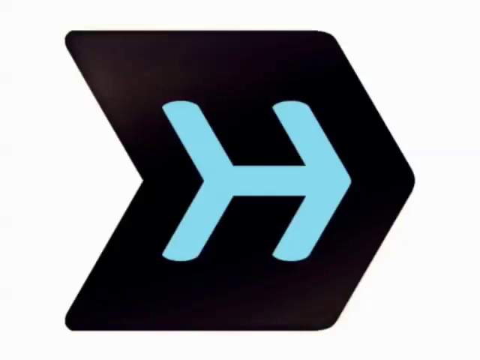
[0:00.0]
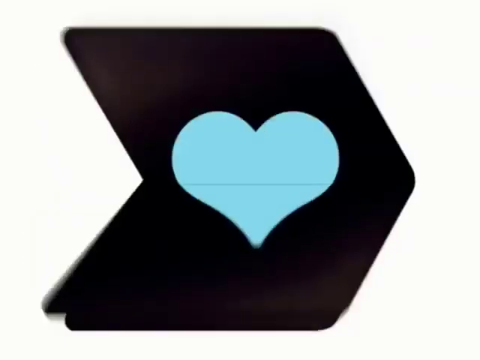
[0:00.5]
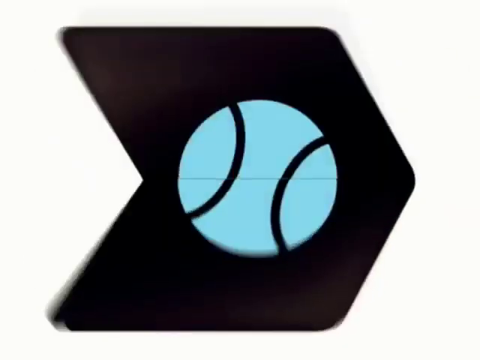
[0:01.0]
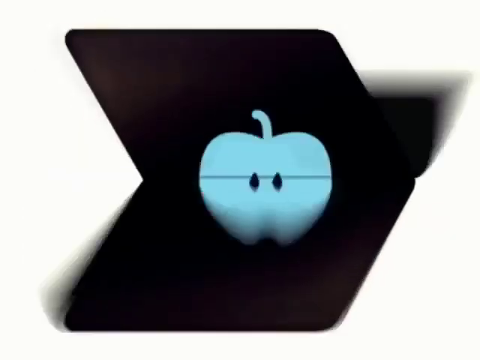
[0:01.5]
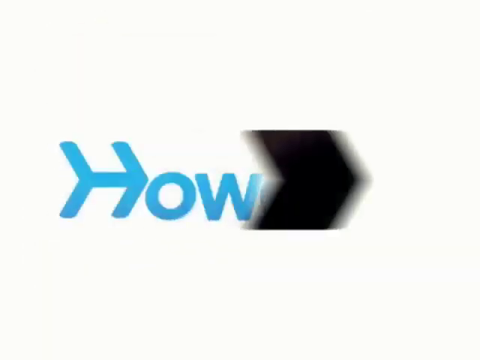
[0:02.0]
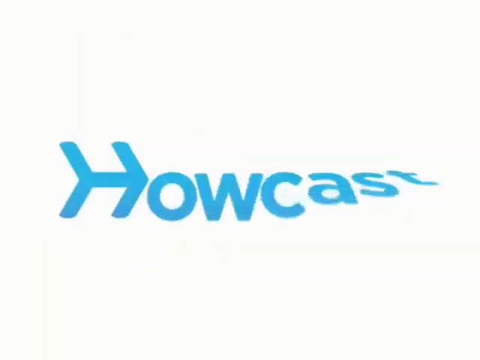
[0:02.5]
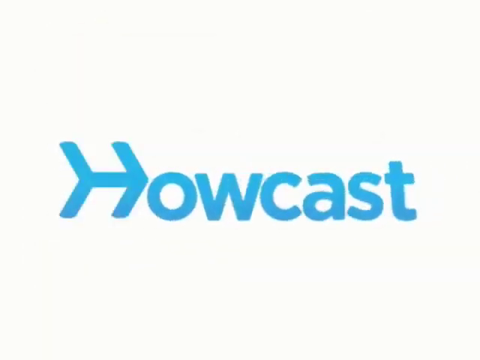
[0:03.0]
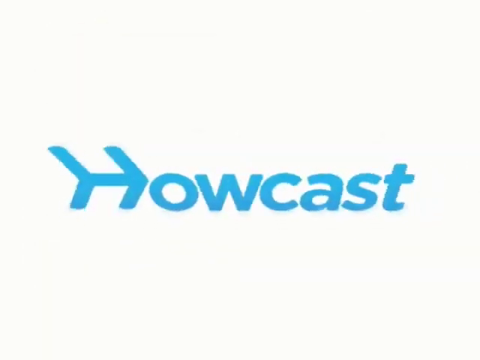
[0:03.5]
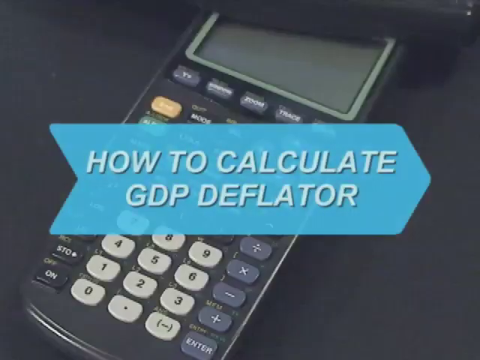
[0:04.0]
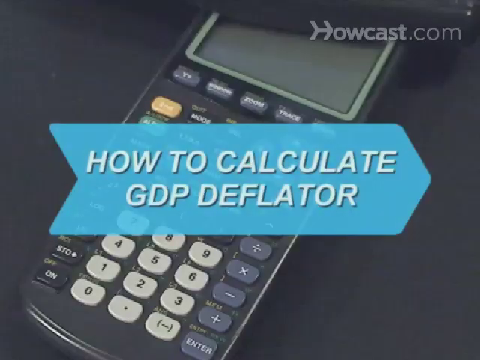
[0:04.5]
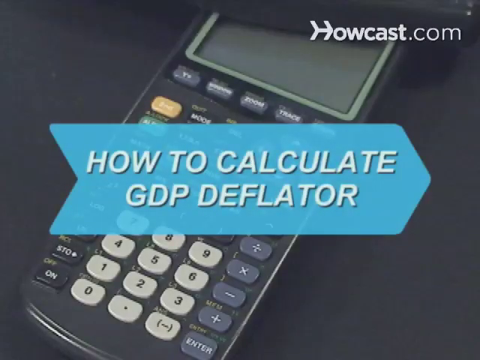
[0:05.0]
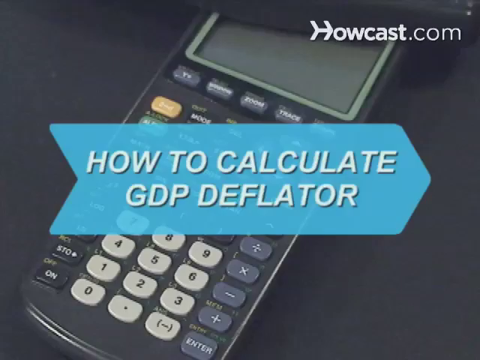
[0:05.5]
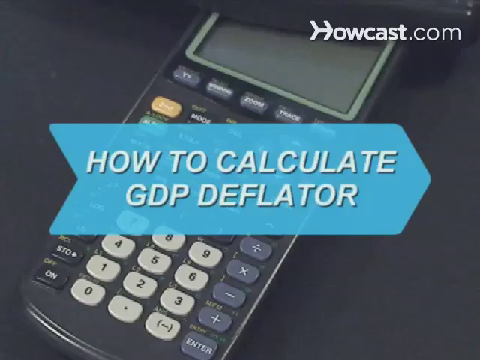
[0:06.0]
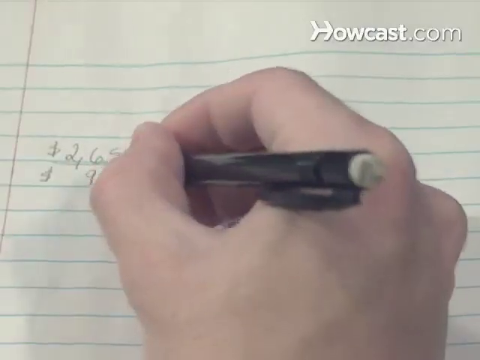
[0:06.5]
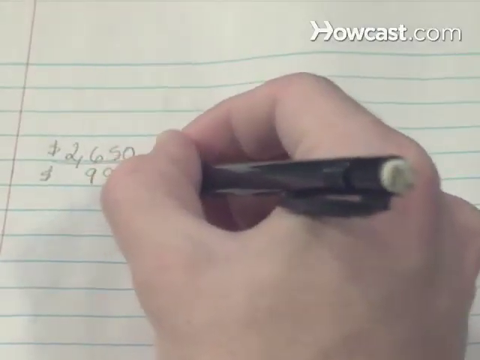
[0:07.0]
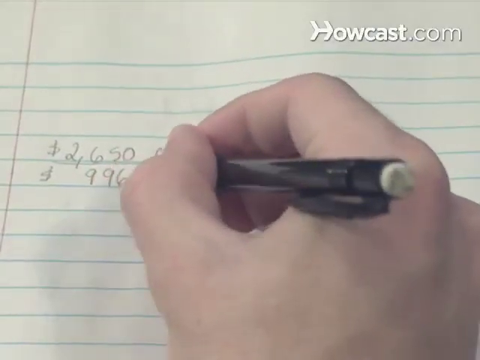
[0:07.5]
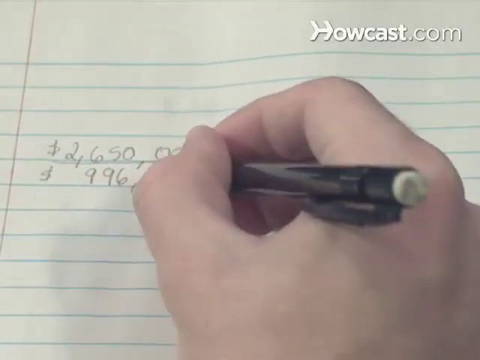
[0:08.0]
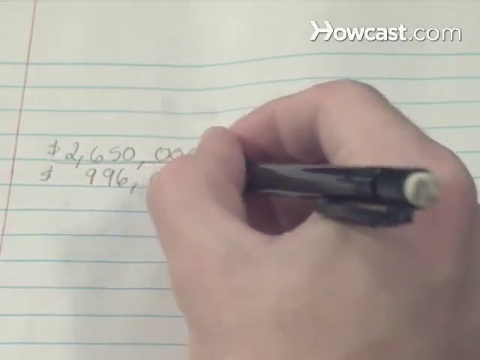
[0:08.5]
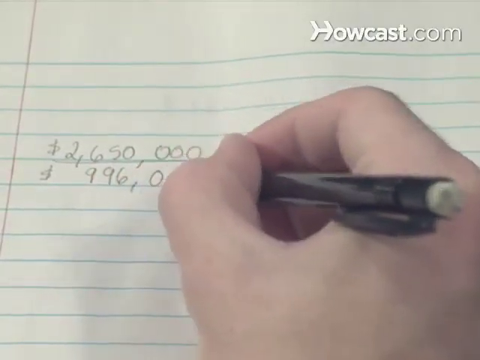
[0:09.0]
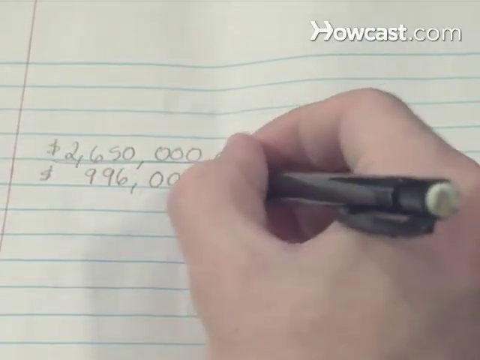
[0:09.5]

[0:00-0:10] The video begins with a full-frame logo: a white background with a black arrow shape containing a smaller pale blue arrow shape. The black shape acts like a flick book, cycling through many different shapes and images, including a knife and fork, a money bag, a dog and a star. It then zooms out of frame from left to right, leaving behind the word "Howcast". The word animates by flipping upwards and turns into a blue arrow with white text on top that reads "how to calculate GDP deflator". Behind this caption is a photograph of a calculator, and "howcast.com" appears in the top right of the screen. The video then cuts to a close-up of someone's hand holding a pencil and writing numbers on a sheet of ruled paper; the numbers are very large, in the millions or billions.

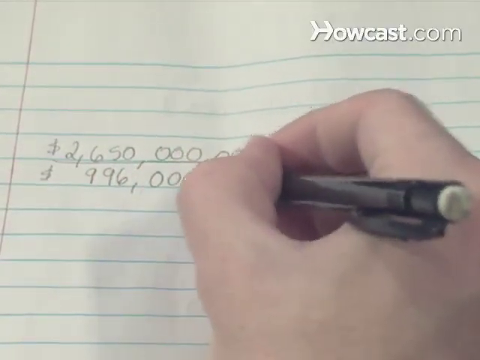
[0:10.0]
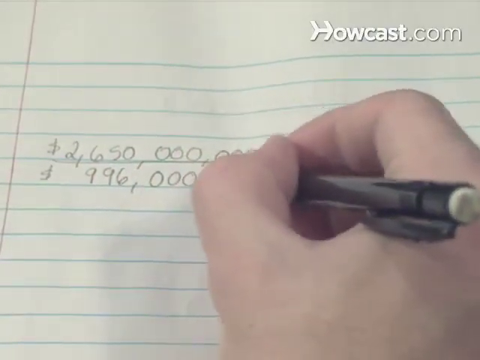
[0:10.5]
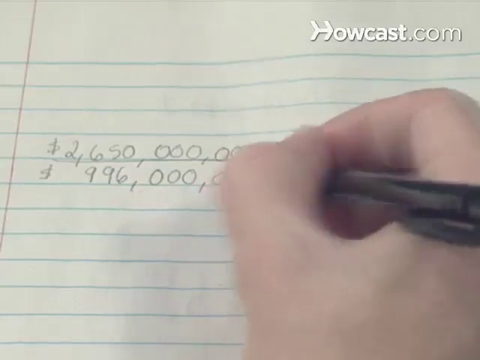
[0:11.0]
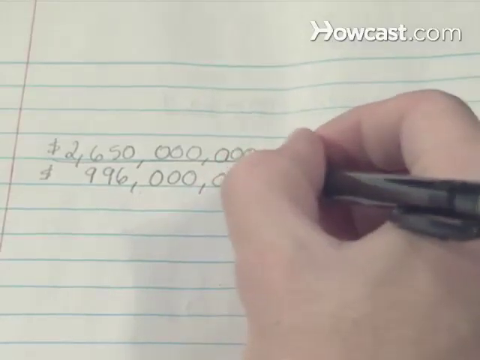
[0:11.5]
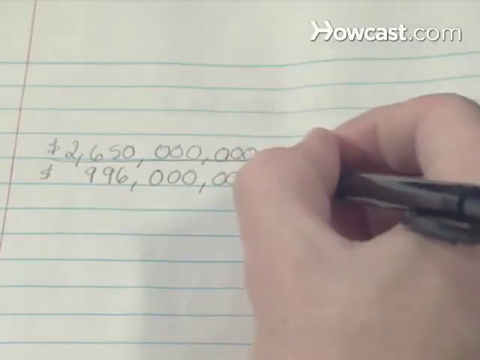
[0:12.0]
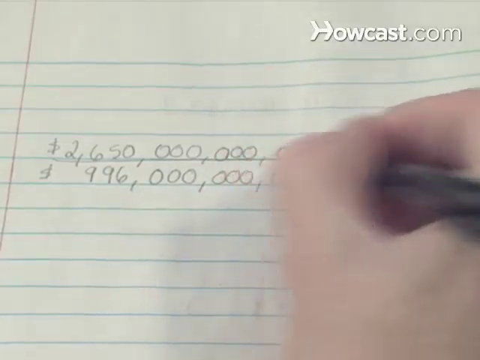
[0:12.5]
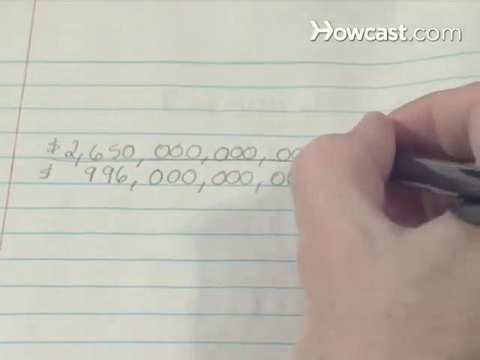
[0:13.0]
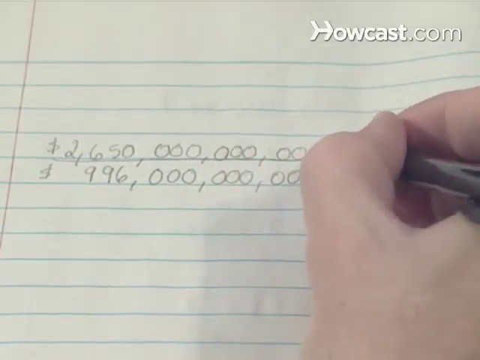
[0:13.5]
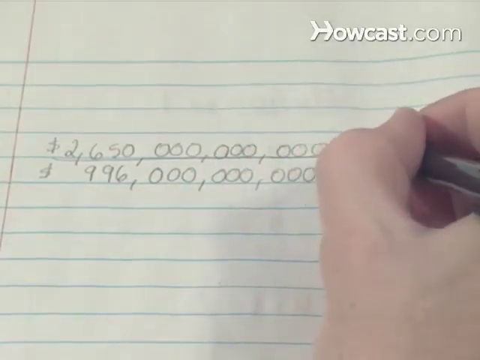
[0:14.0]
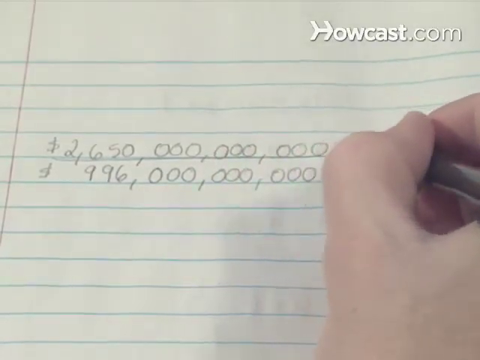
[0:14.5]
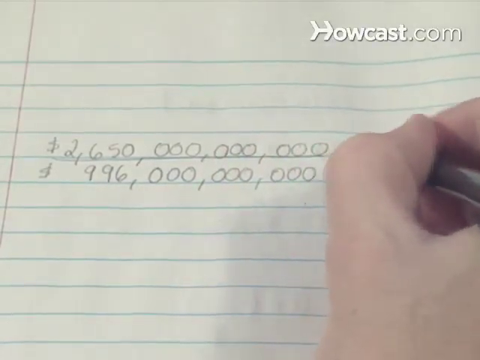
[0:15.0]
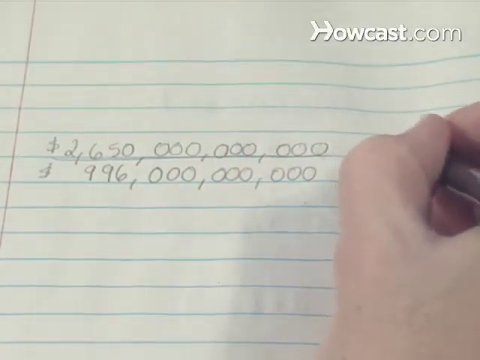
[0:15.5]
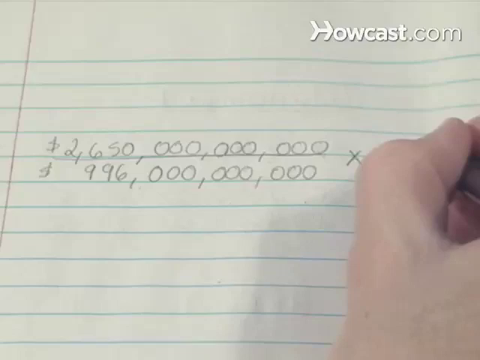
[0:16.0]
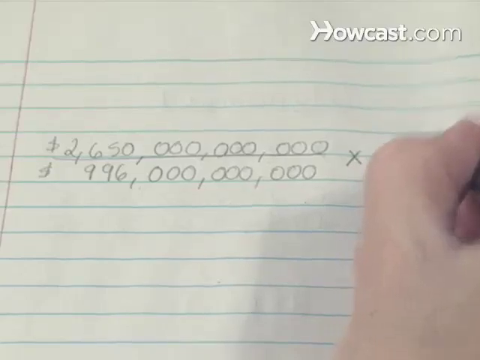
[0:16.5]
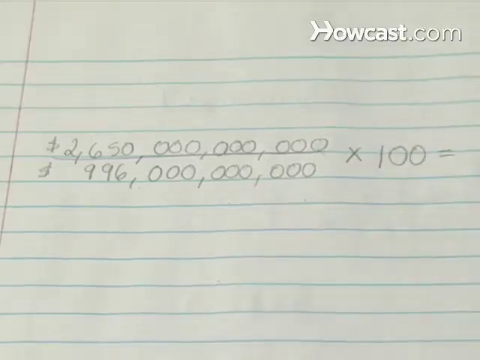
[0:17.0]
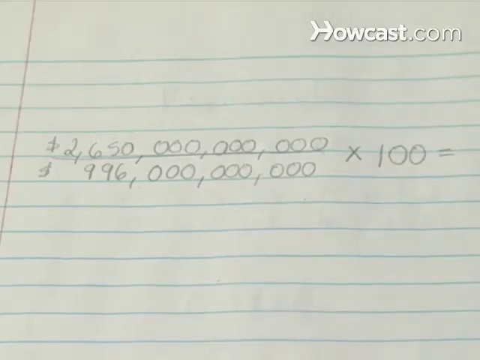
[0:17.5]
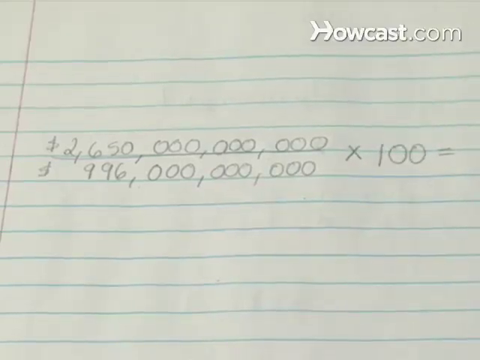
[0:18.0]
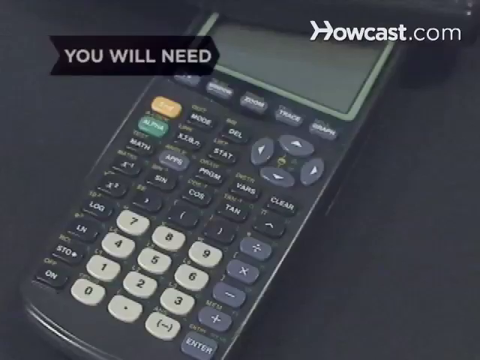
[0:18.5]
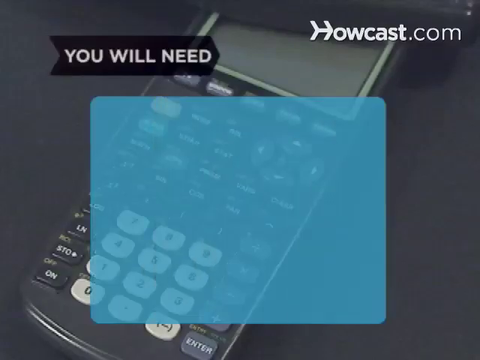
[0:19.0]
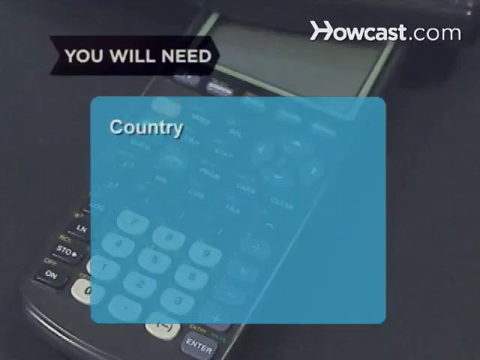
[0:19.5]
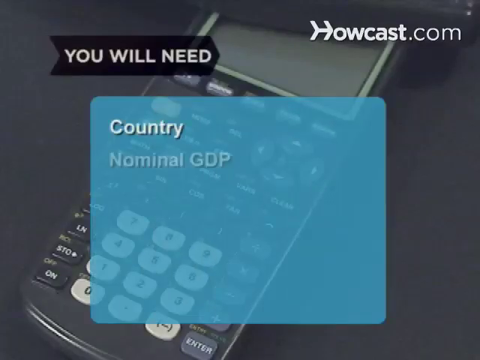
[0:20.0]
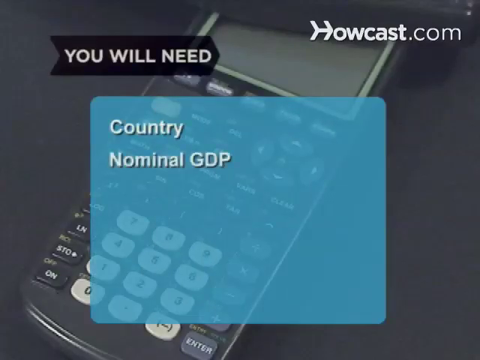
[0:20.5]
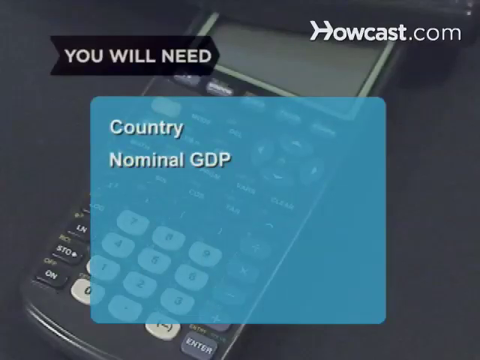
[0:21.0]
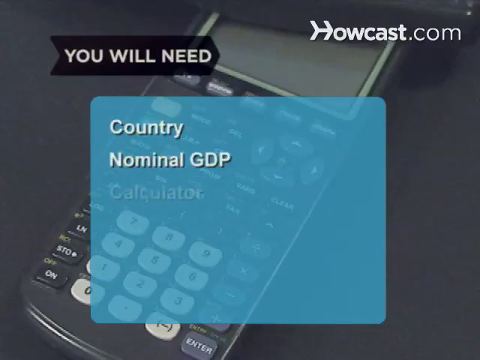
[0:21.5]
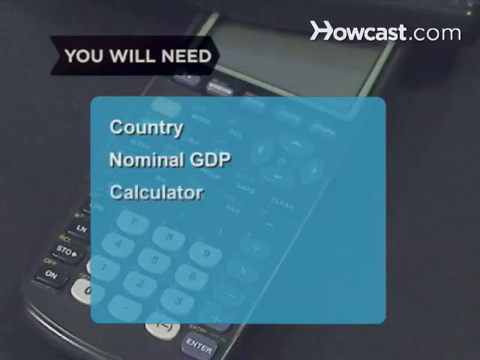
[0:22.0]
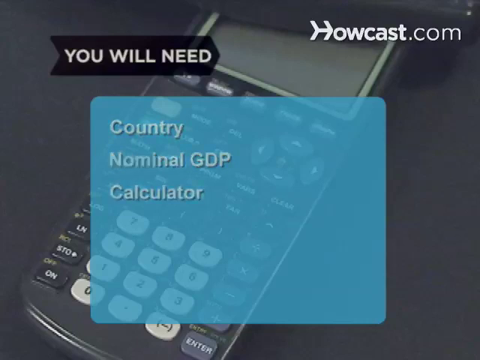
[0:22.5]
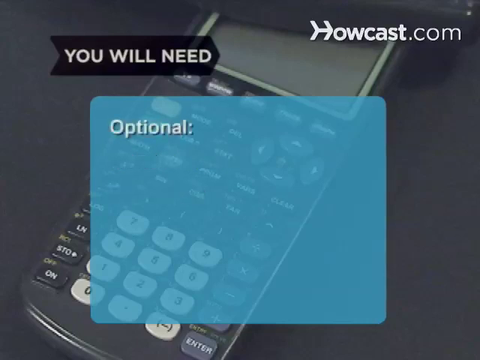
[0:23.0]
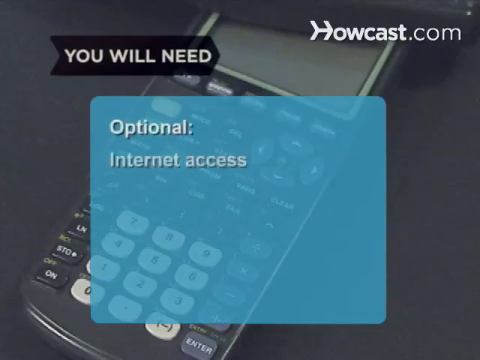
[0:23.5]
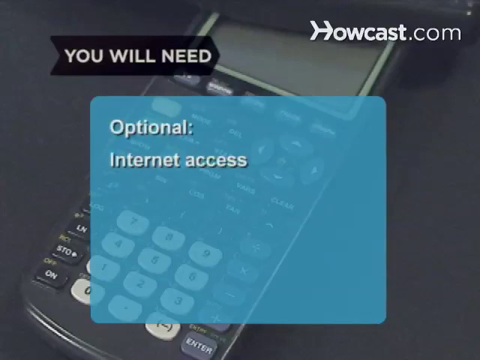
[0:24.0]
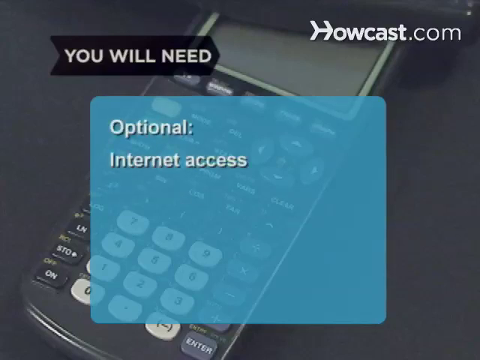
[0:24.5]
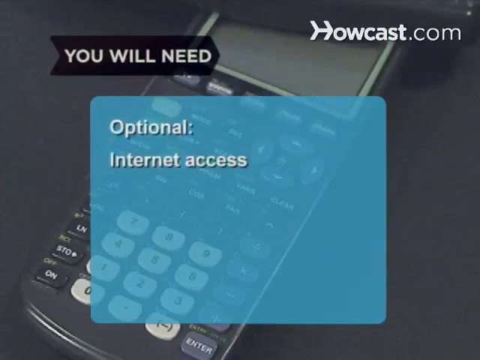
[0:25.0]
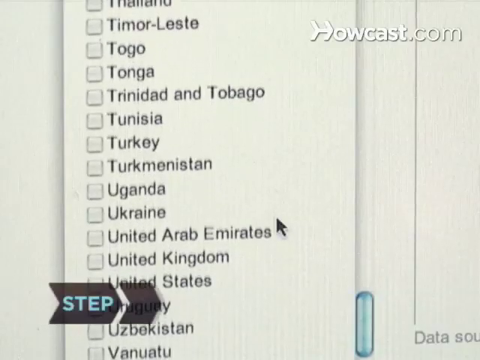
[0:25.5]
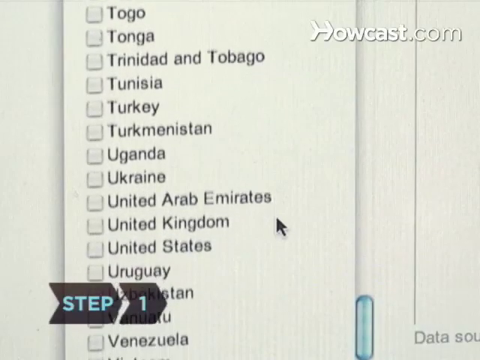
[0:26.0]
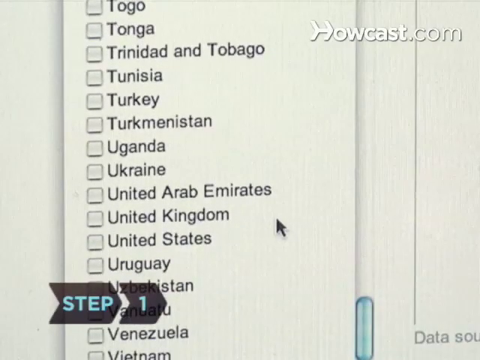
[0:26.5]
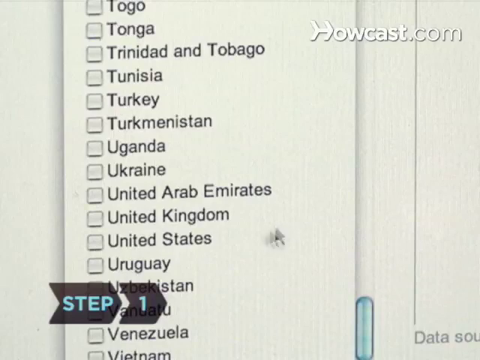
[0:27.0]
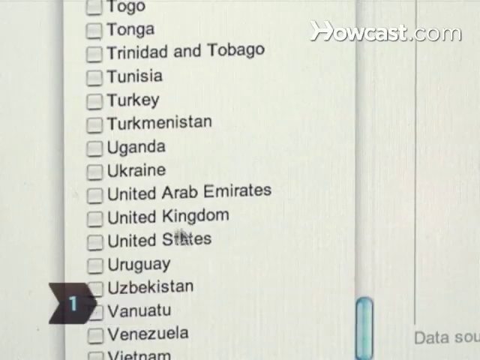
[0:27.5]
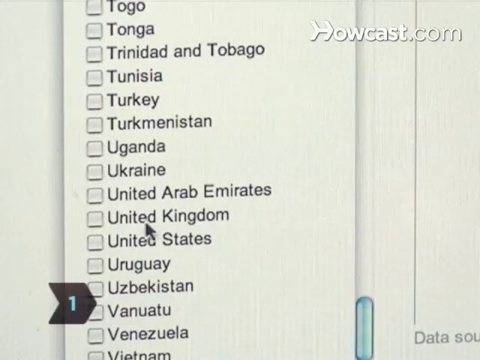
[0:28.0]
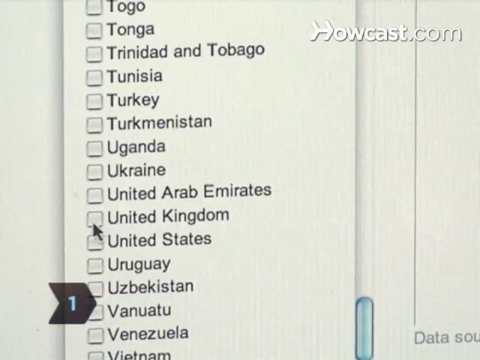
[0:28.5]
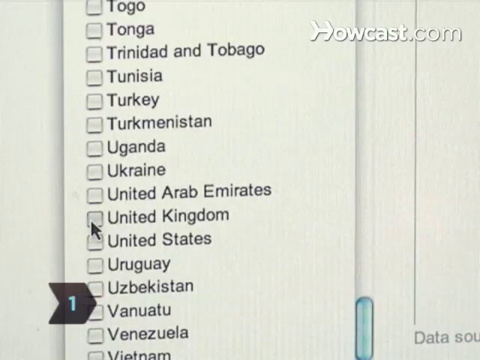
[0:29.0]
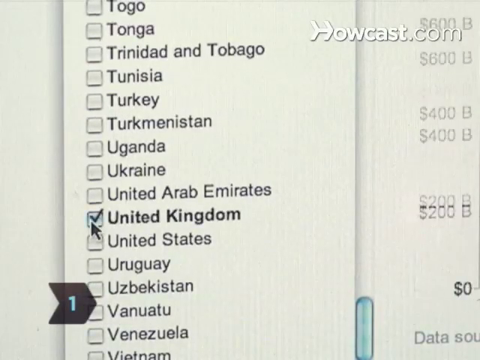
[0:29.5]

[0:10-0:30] In the continuing close-up, the person writes very large numbers on the paper. The number on the top row is "2650000000000" and the number underneath it is "99600000000", both with a dollar sign beside them. Next to both numbers is written "times 100 equals". The video cuts back to the photograph of a calculator with a caption on top that reads "you will need country. nominal GDP calculator" and then "optional, internet access". It then cuts to a close-up of a computer screen with a caption at the bottom reading "Step 1". An extreme close-up shows part of the screen with a list of country names; the cursor hovers around and then clicks on United Kingdom.